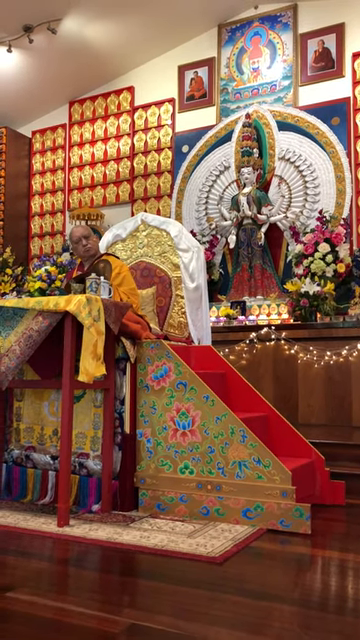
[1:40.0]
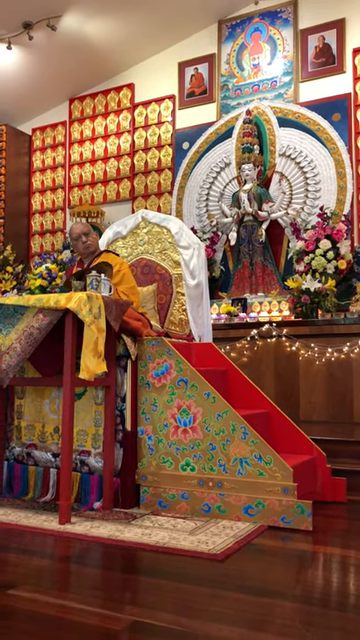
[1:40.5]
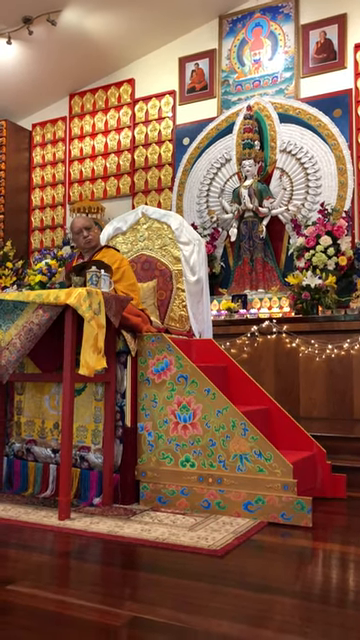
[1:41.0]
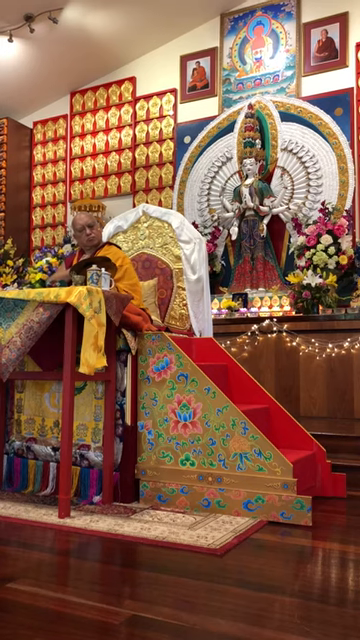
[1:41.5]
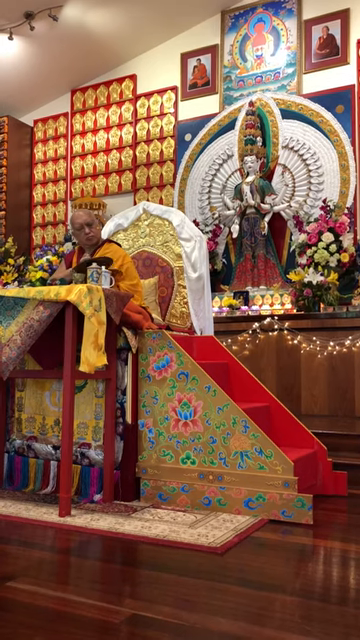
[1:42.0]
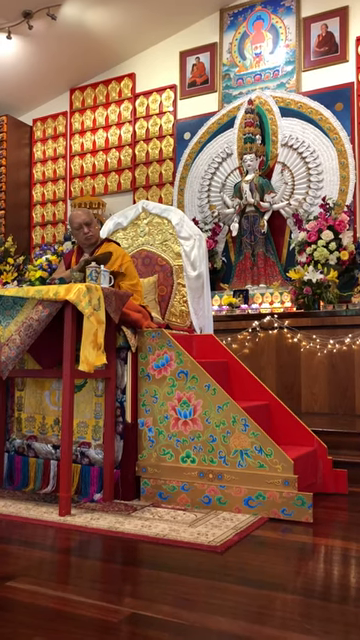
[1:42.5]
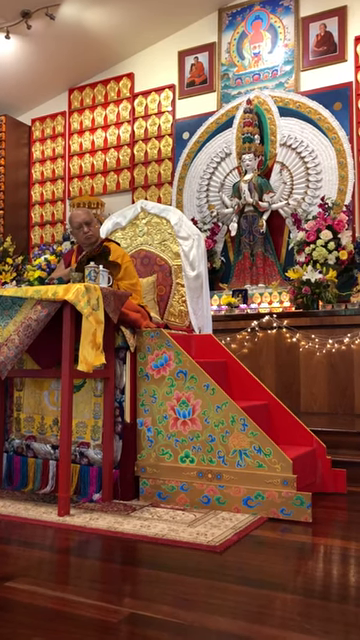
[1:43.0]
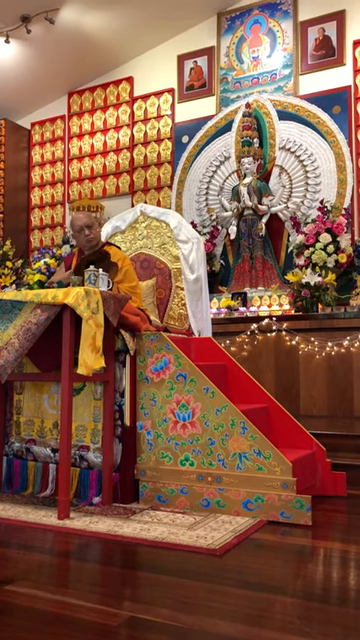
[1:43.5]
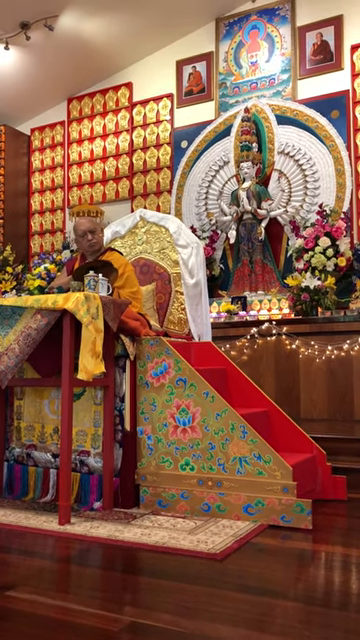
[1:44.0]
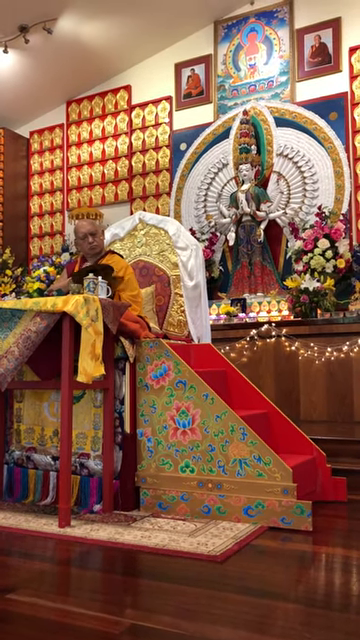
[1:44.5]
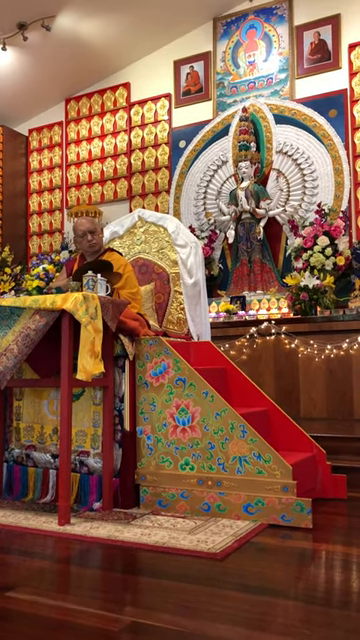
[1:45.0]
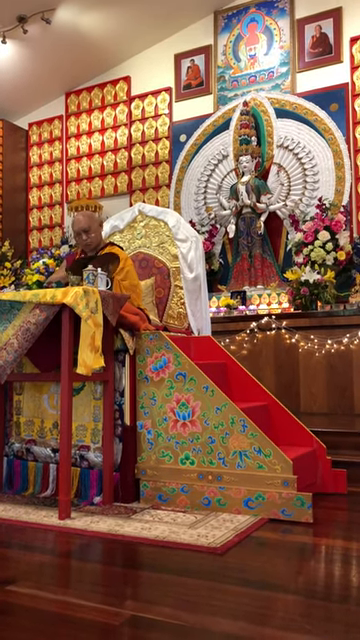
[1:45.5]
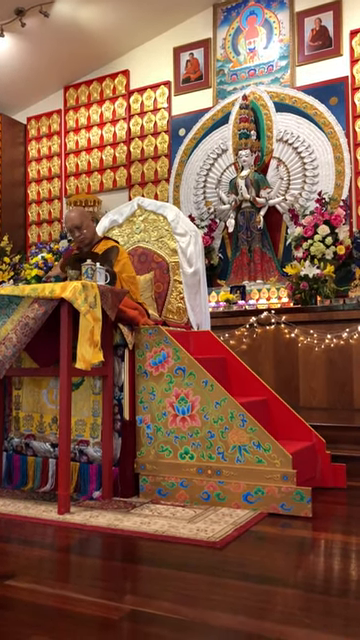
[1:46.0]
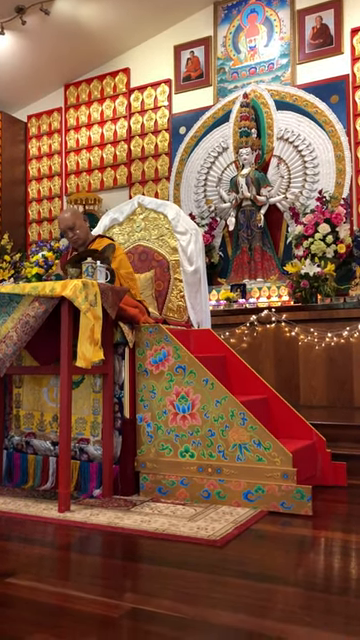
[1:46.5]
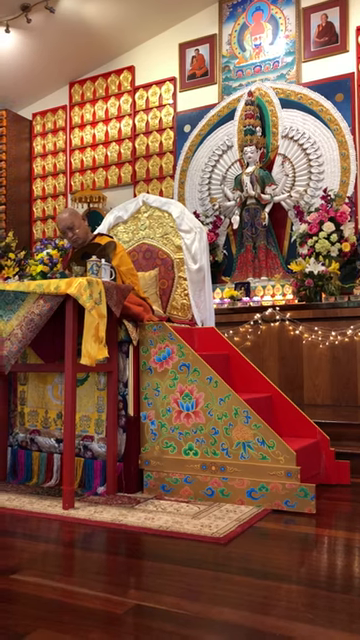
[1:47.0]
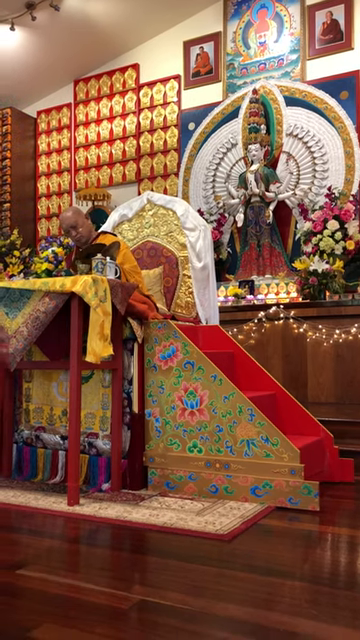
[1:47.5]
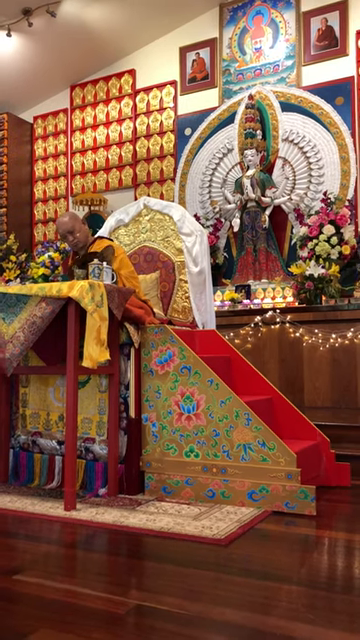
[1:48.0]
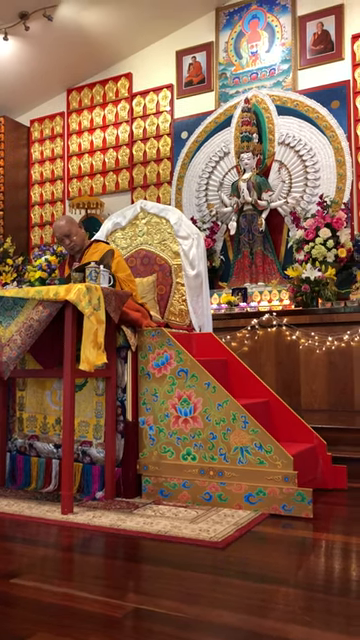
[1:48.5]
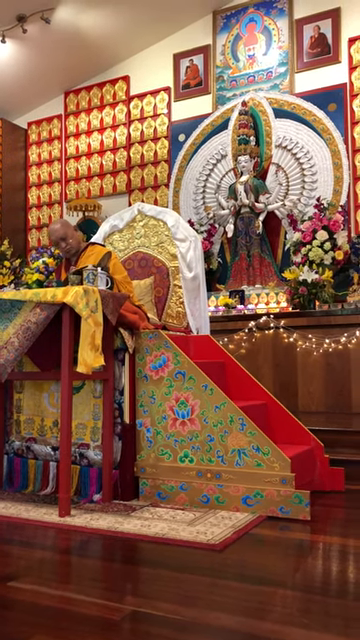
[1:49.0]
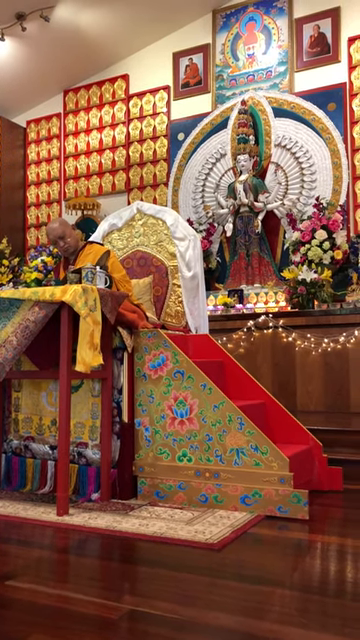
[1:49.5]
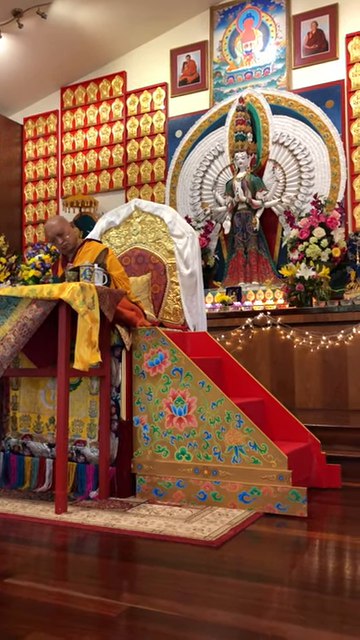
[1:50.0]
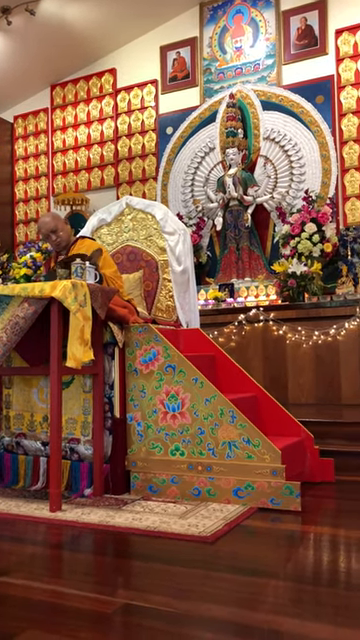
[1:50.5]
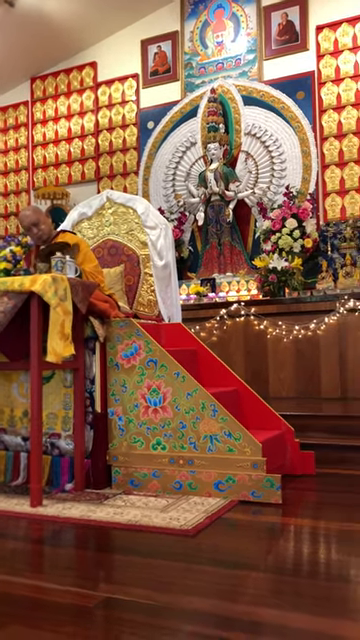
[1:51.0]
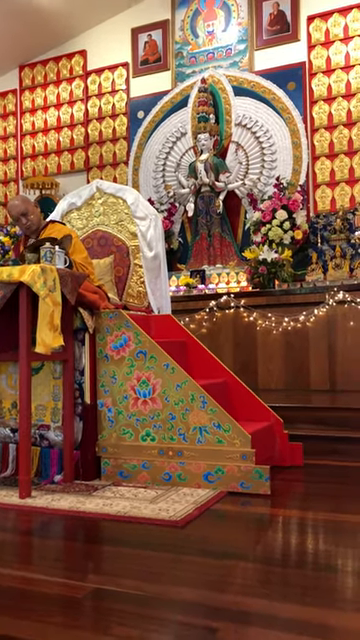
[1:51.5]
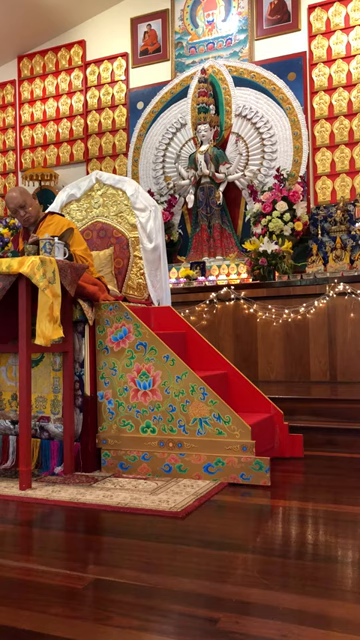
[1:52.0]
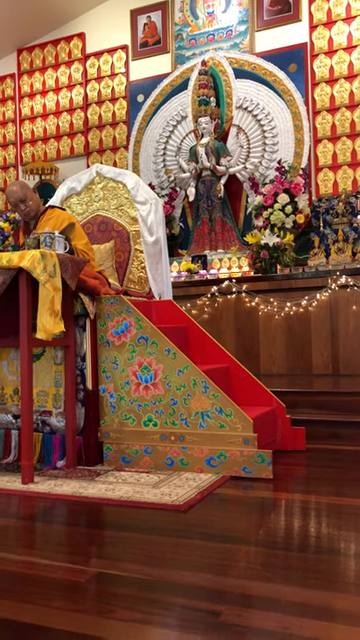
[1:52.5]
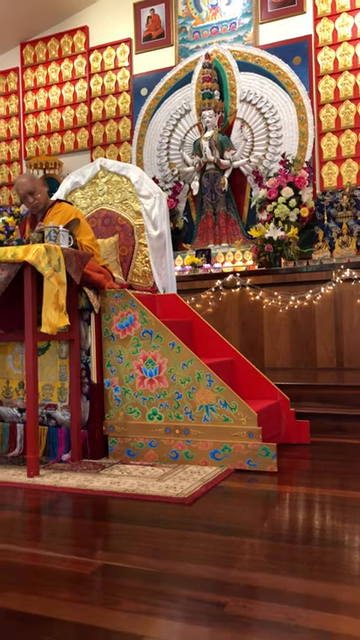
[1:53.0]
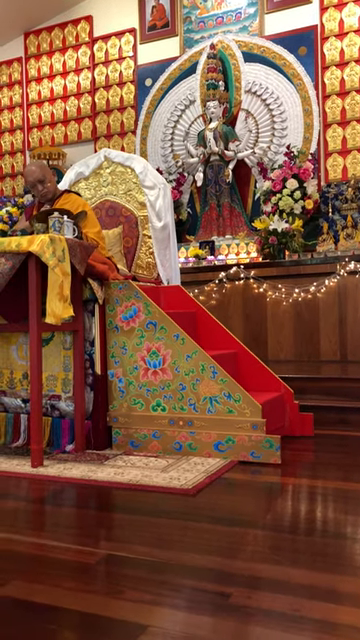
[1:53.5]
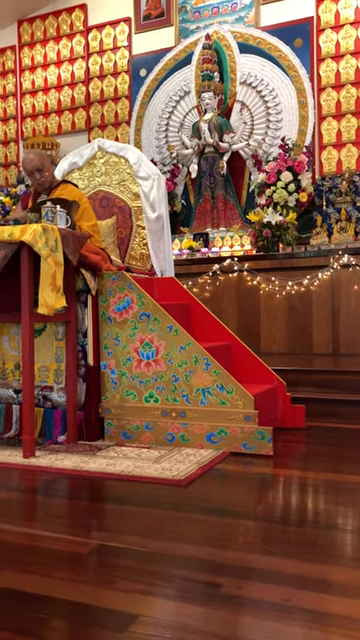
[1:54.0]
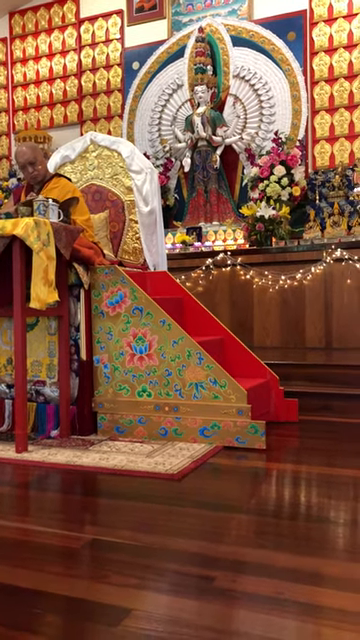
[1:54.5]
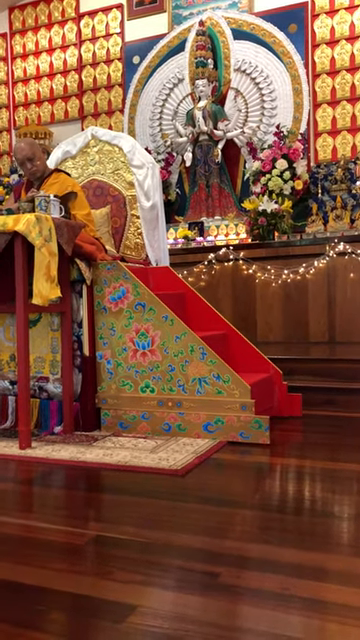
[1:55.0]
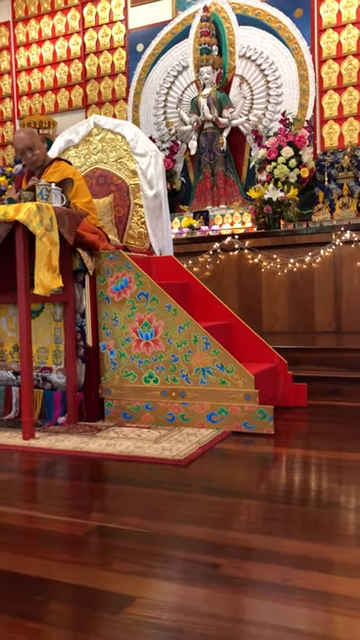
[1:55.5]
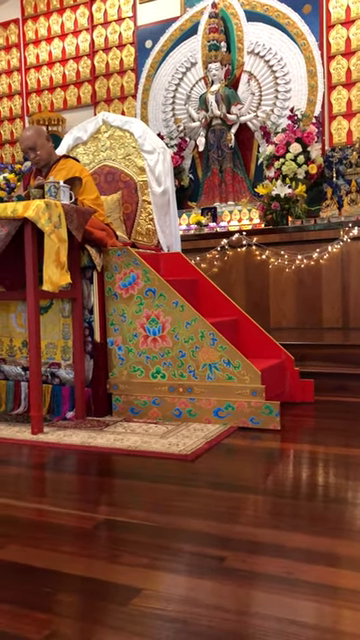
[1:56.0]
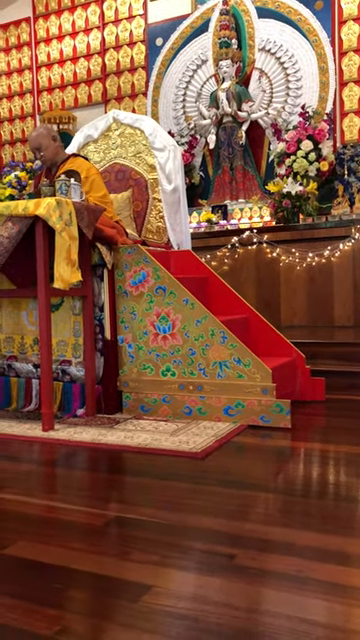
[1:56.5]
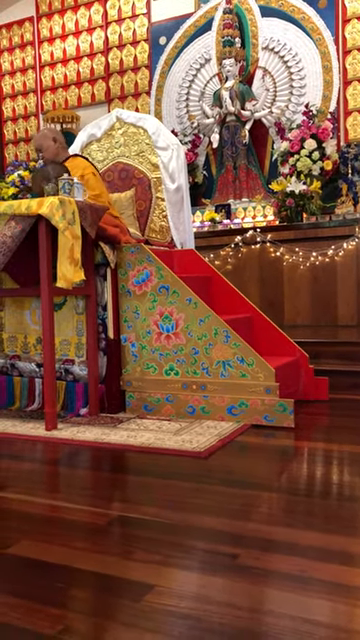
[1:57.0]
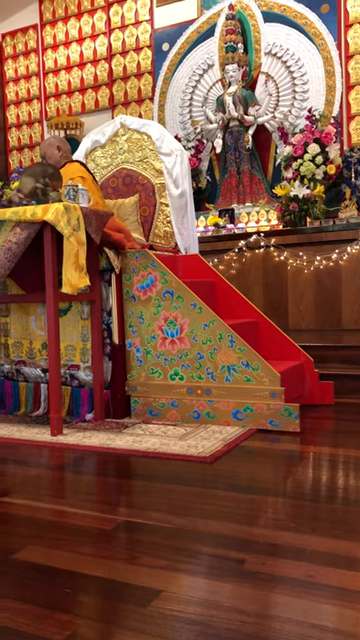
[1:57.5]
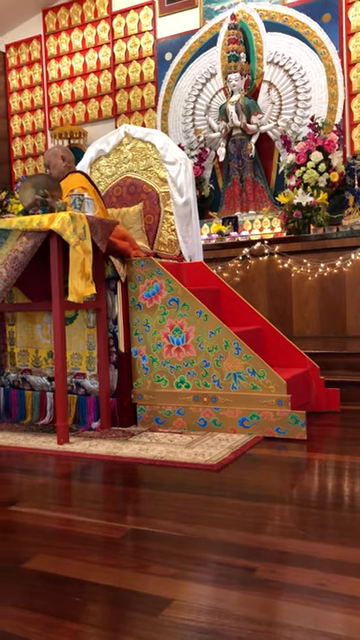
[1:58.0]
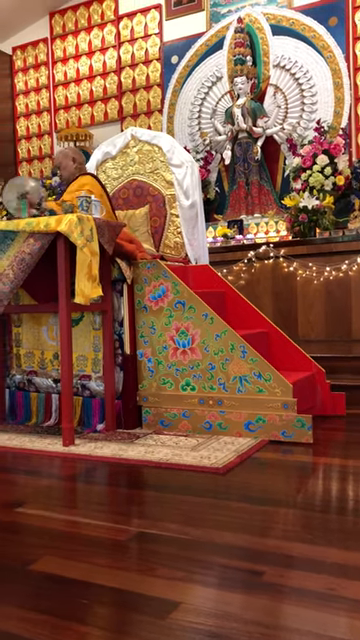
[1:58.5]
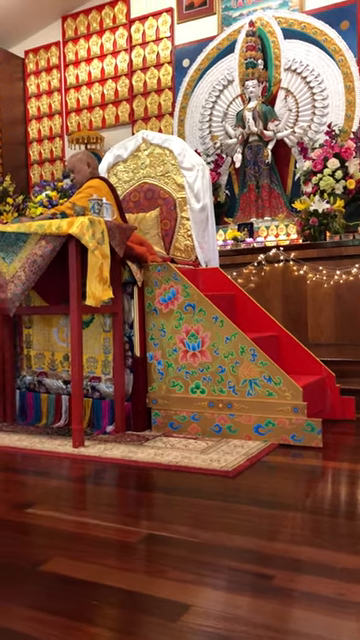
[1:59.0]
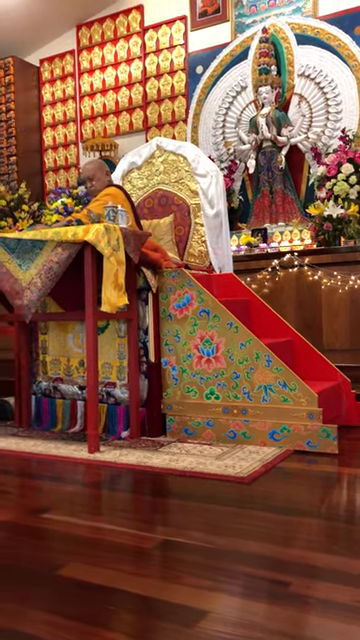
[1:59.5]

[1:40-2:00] Inside a Buddhist temple, the back wall holds various religious paraphernalia: two photos of monks in what are possibly kind of purple and orange outfits, a poster, and a sculpture of a woman with a big golden and green headdress. The sculpture is on a kind of altar behind the monk, which also has big displays of flowers, little lit candles and fairy lights. The Buddhist monk plays a little set of cymbals while sat on a golden throne, with a really high table in front of him covered in scarves. The chair and table are so high that to the side there is a little box with three steps to allow him to get up onto the chair. He is on his own, looking very serious and looking at the cymbals as he taps them together gently, moving backwards and forwards and swaying his body.